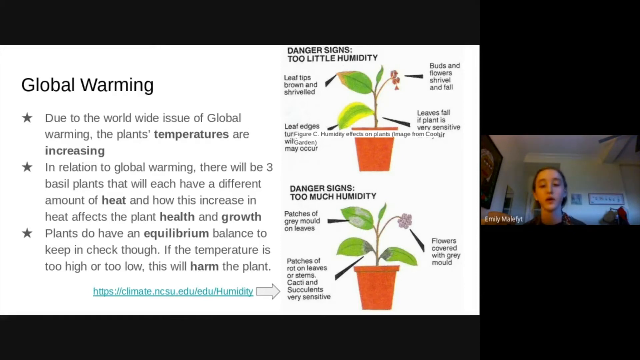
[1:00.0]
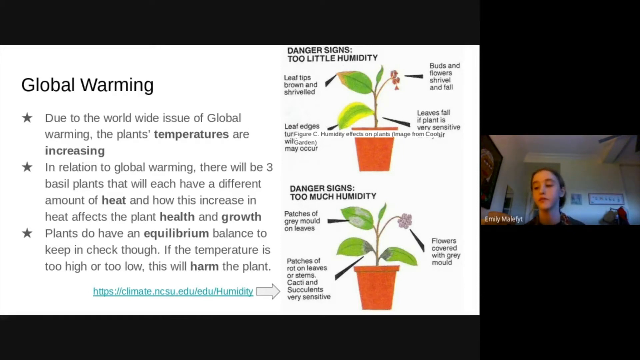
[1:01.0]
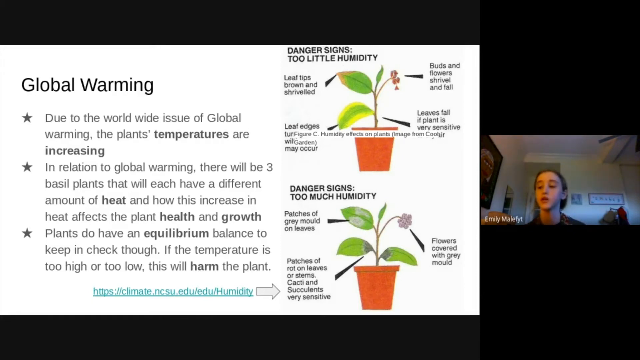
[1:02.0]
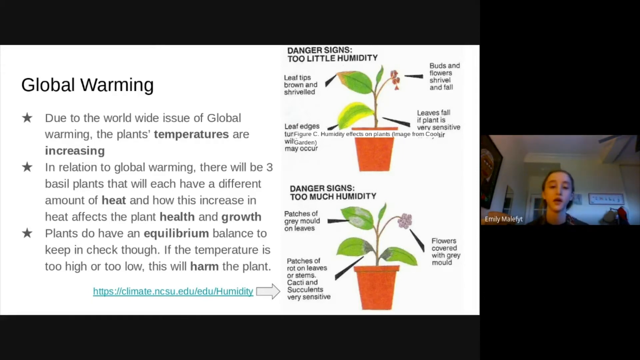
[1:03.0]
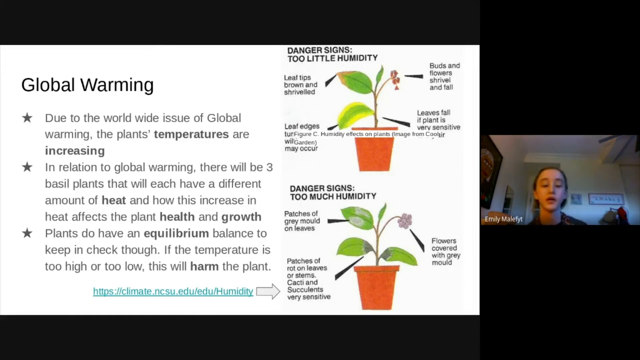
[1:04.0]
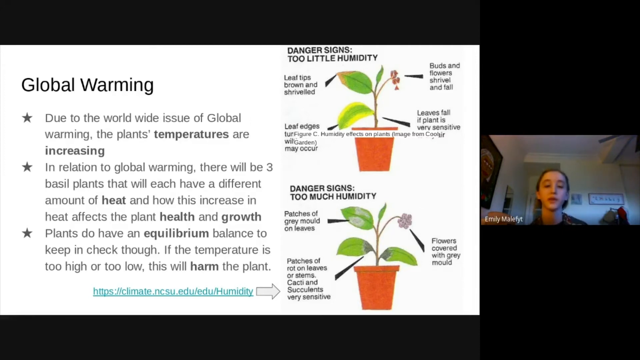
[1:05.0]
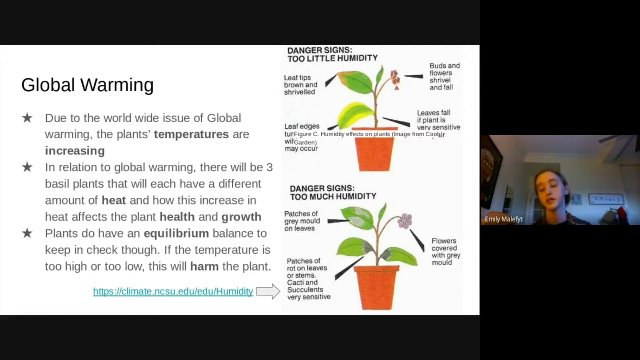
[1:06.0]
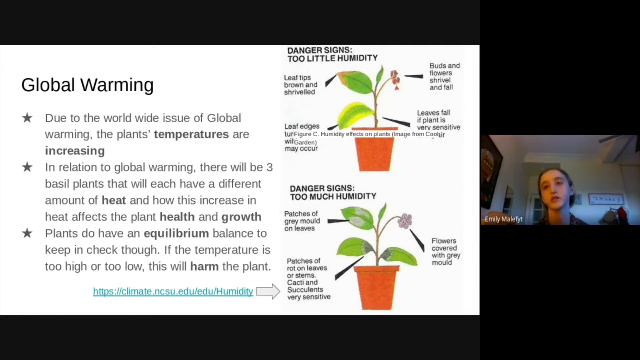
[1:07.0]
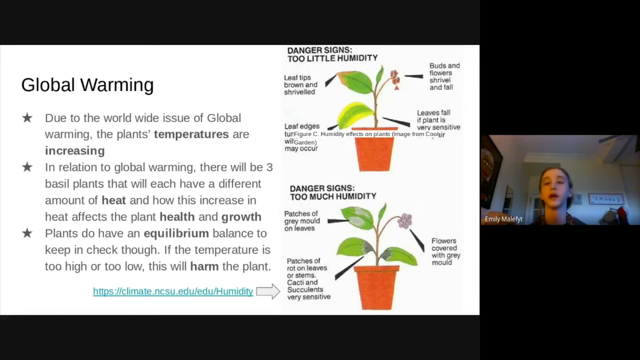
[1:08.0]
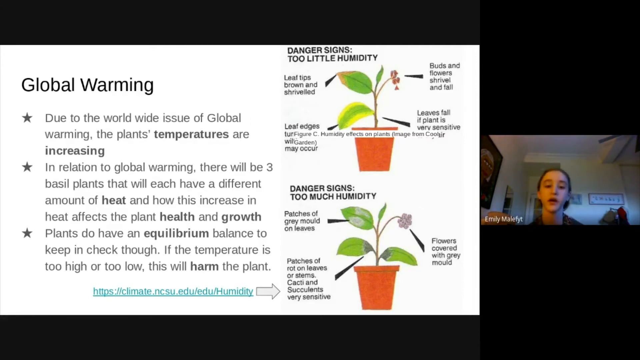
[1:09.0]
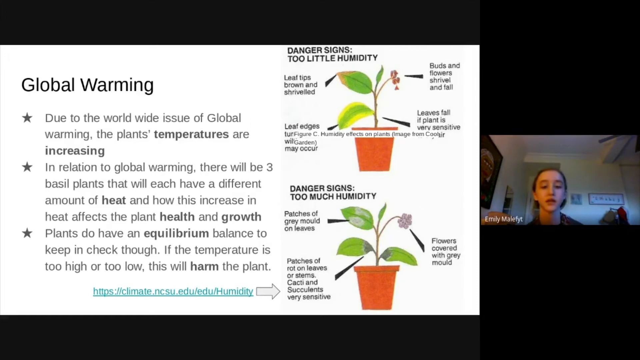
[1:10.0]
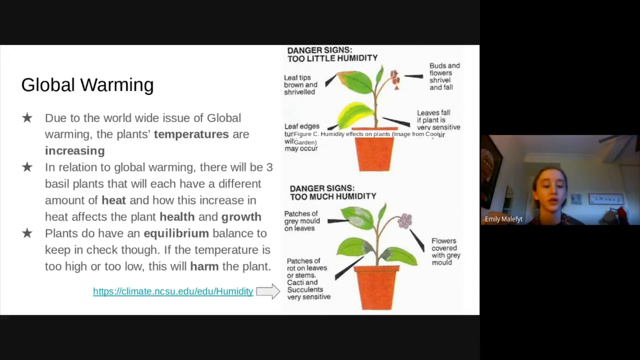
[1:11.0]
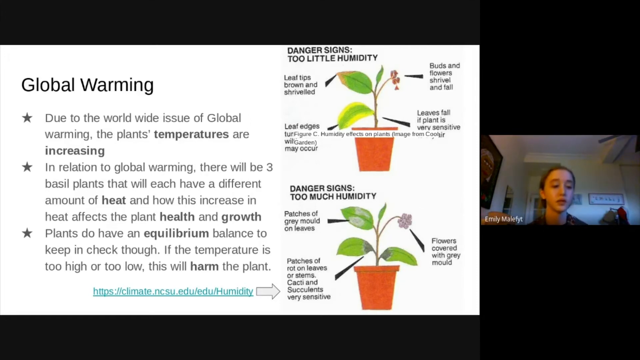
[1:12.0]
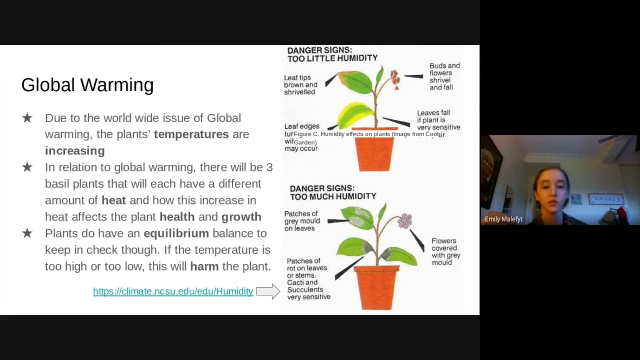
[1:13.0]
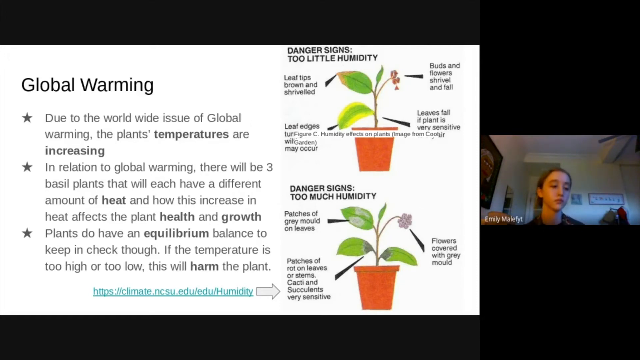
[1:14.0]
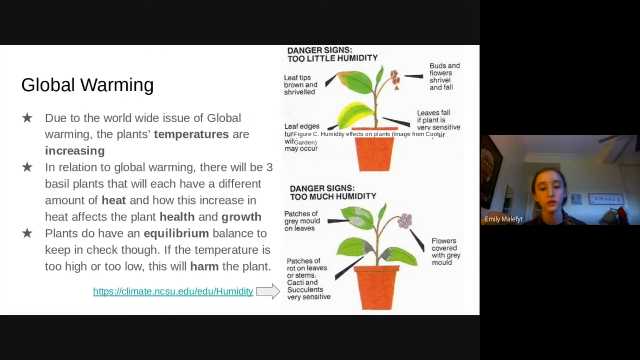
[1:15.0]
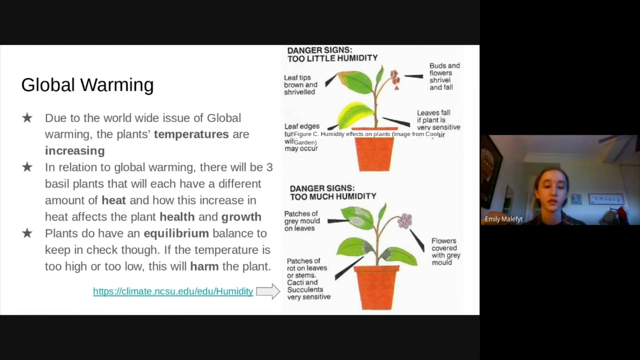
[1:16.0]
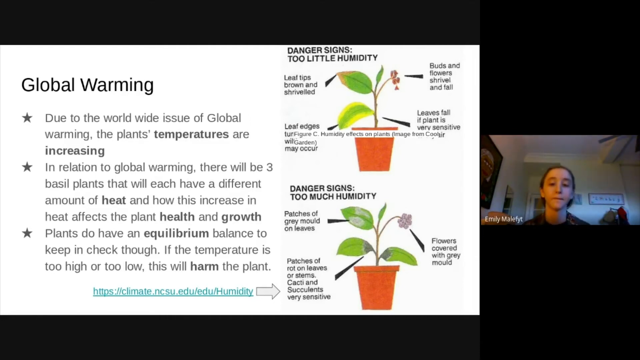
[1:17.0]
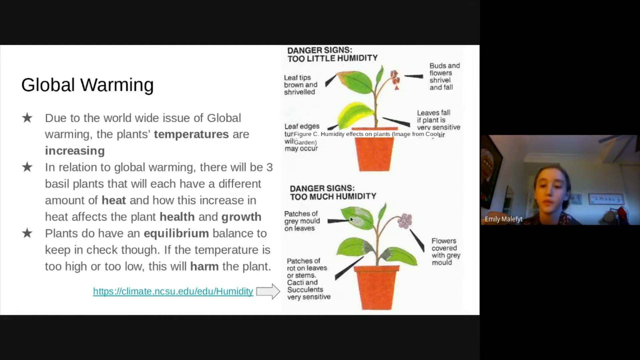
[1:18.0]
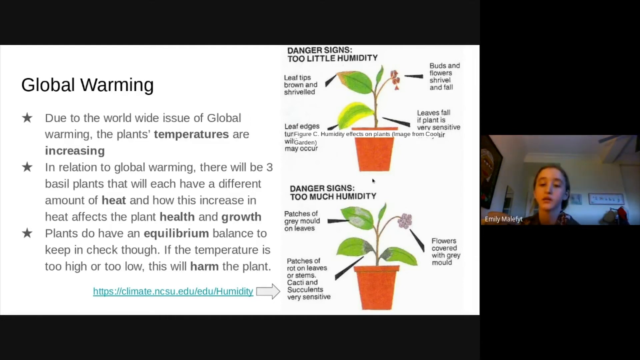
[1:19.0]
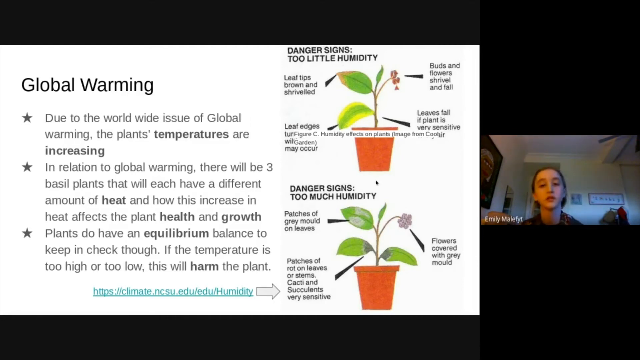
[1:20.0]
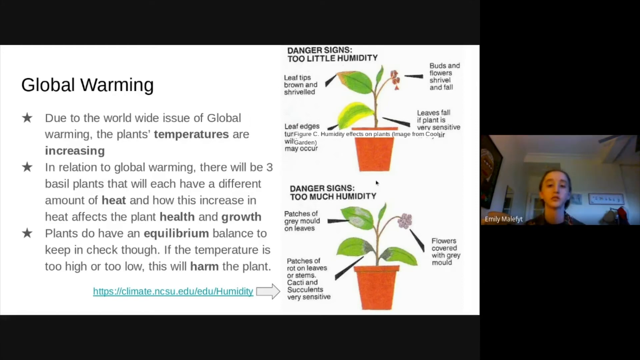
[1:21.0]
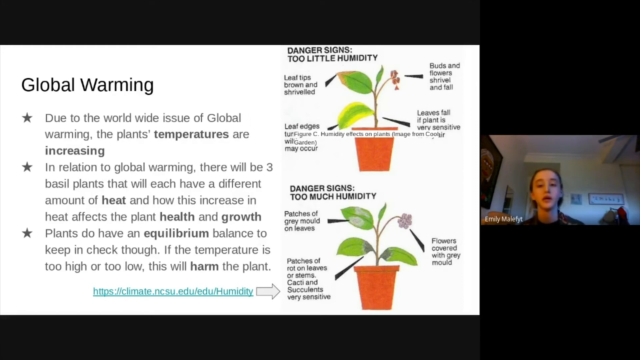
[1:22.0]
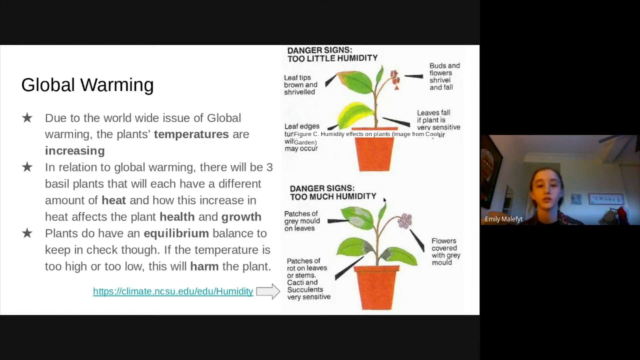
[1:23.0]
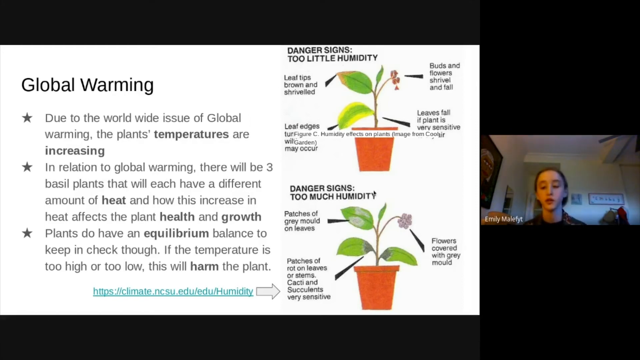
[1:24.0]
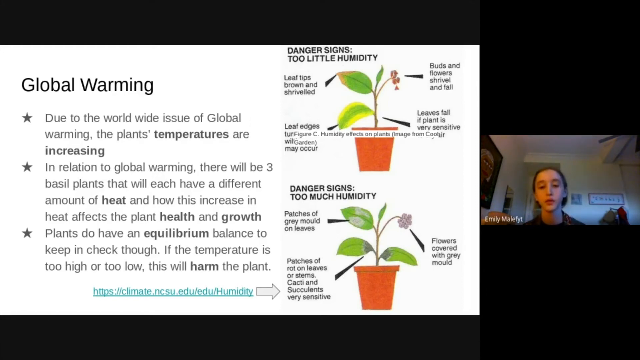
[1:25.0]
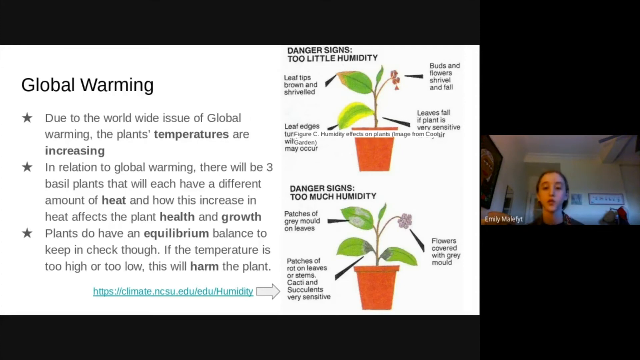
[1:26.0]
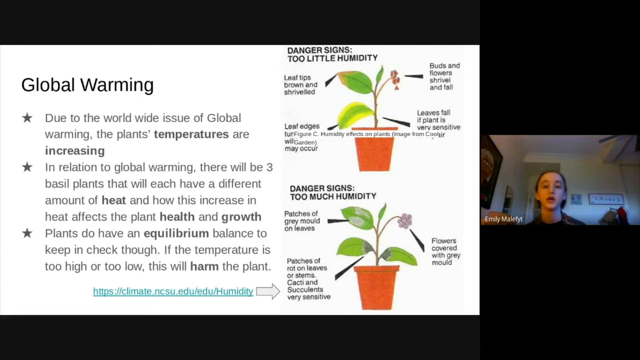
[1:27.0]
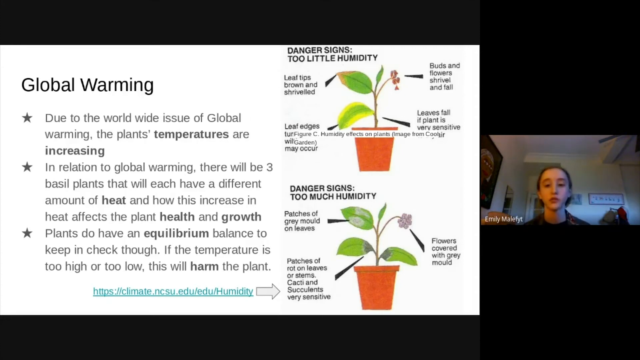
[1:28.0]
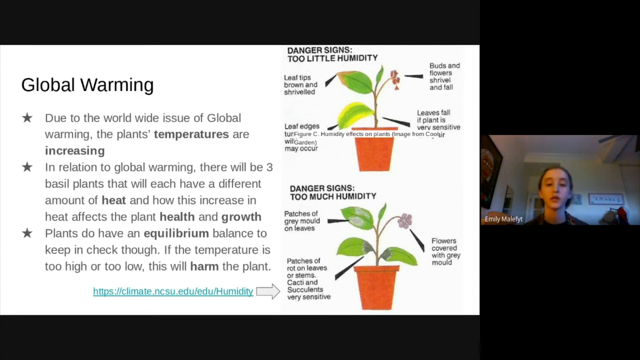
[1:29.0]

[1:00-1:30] Emily continues to speak. For the first few seconds she seems to look toward the right side of where she is recording from, possibly at notes or references, and this happens a few times. She looks up slightly and then back down at the screen in front of her, as if speaking to an audience. Her cursor comes back into view, and she seems to point at the diagram visualizing too much humidity on a plant: the cursor hovers over the tall leaf part of the plant showing patches of gray mold on leaves, then over the words too much humidity, and disappears after a few seconds of no use.